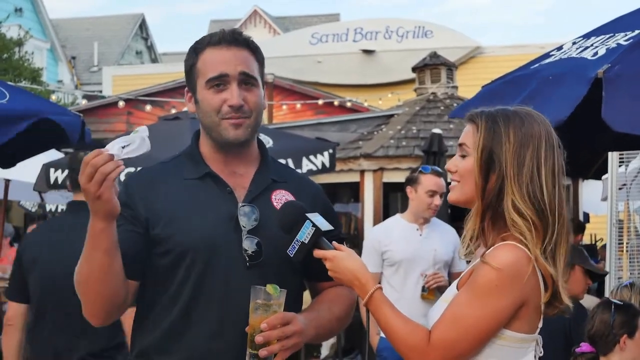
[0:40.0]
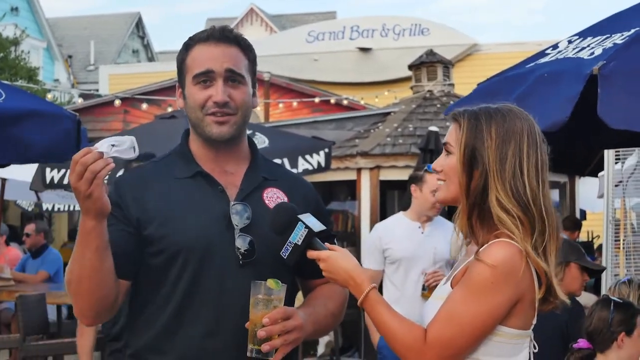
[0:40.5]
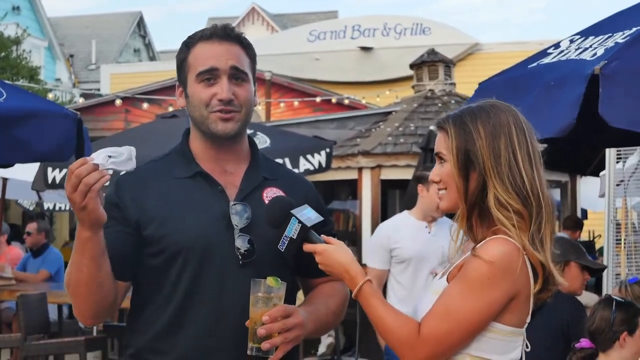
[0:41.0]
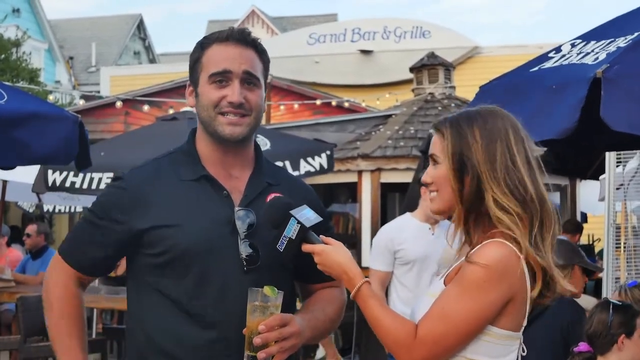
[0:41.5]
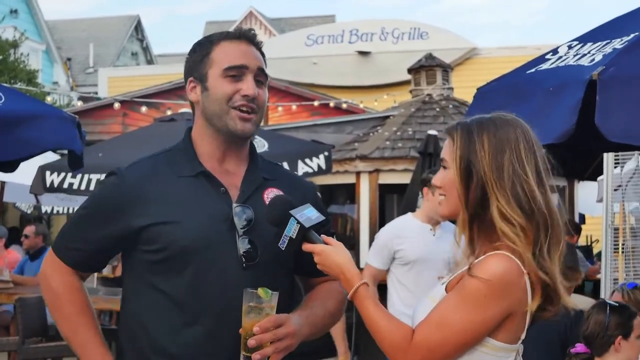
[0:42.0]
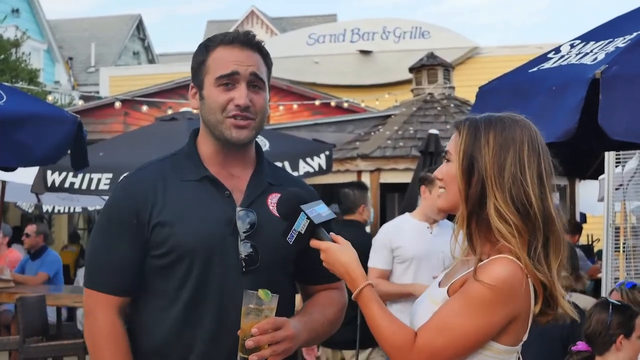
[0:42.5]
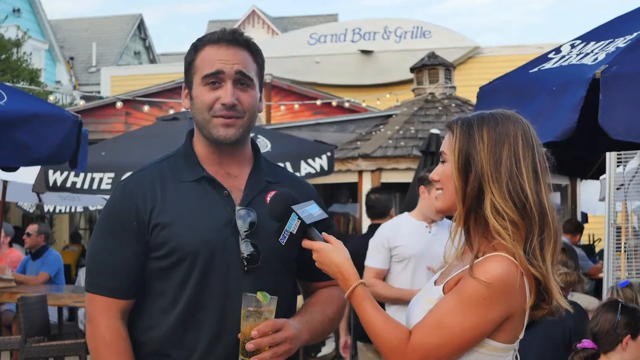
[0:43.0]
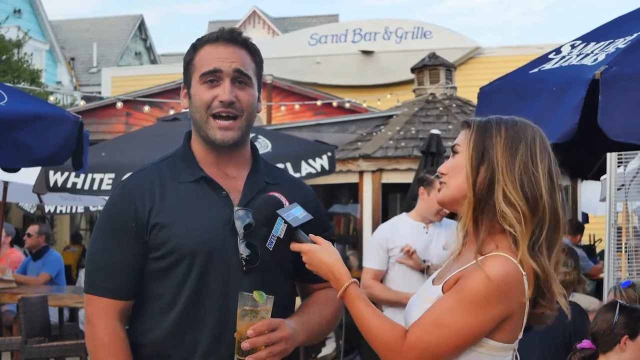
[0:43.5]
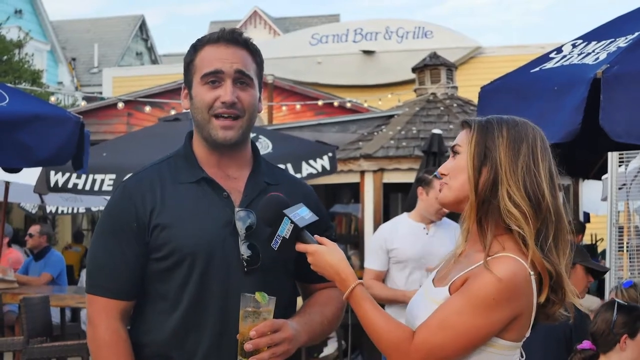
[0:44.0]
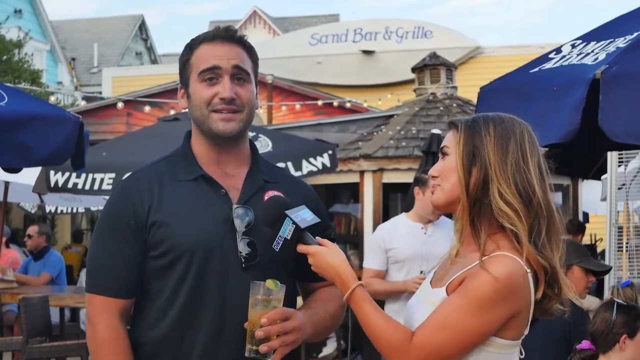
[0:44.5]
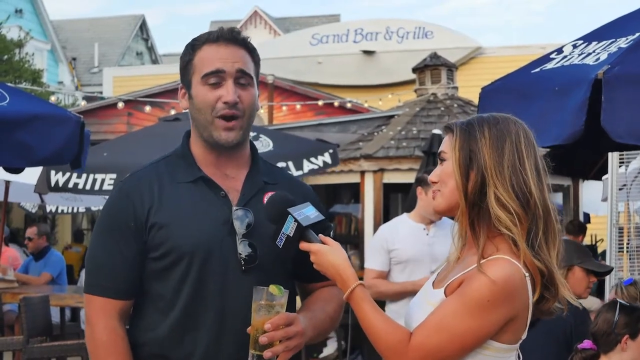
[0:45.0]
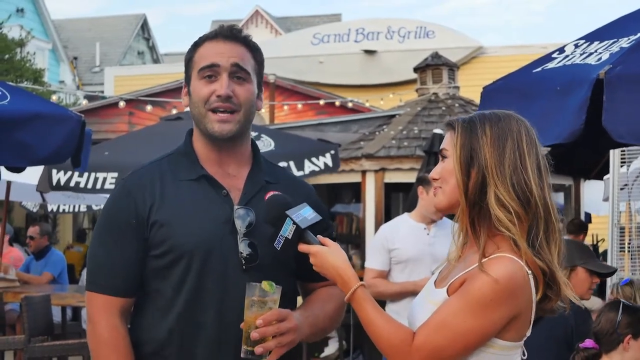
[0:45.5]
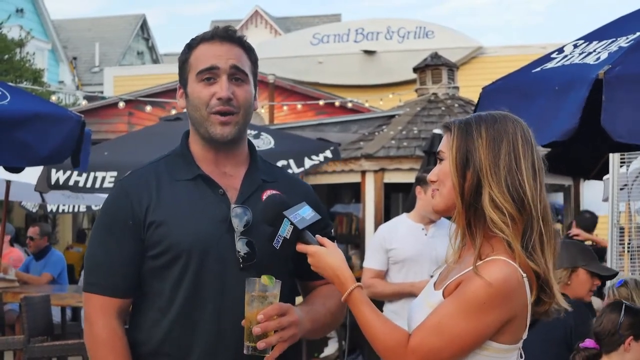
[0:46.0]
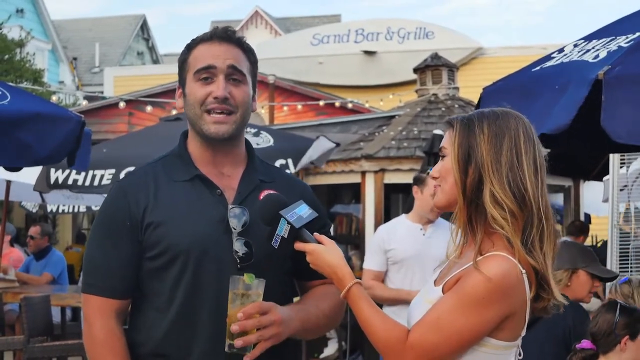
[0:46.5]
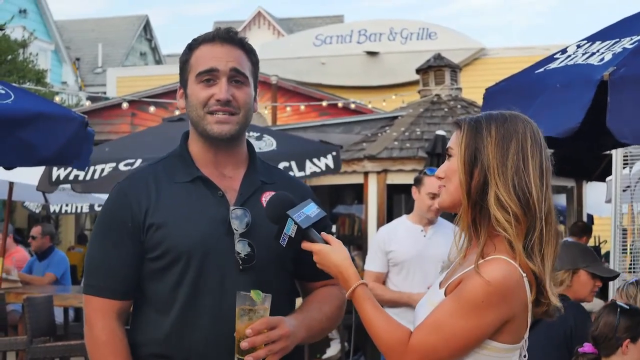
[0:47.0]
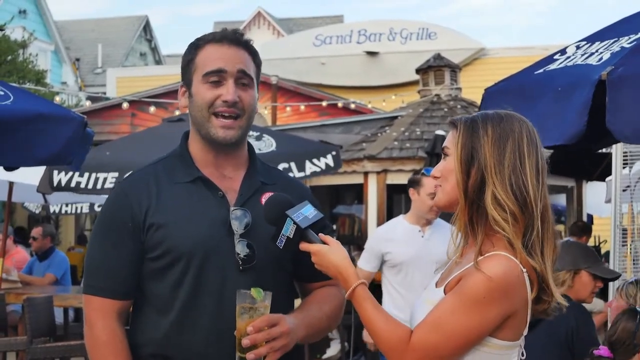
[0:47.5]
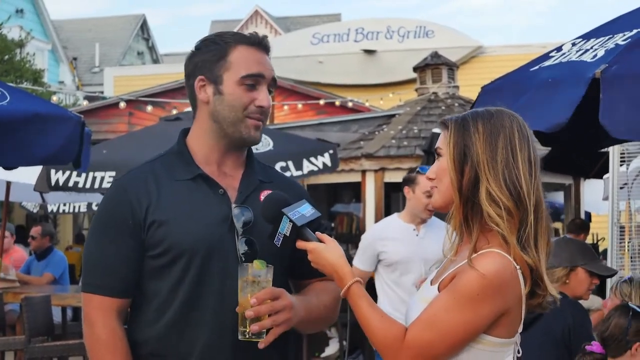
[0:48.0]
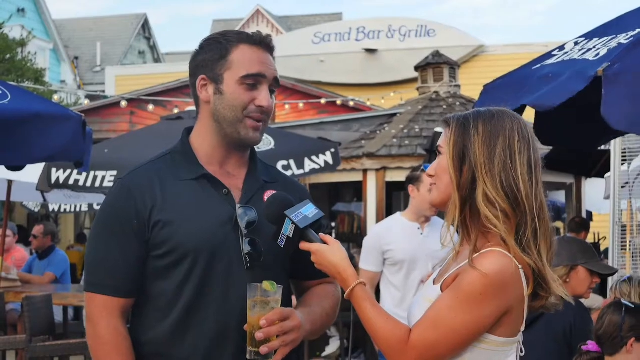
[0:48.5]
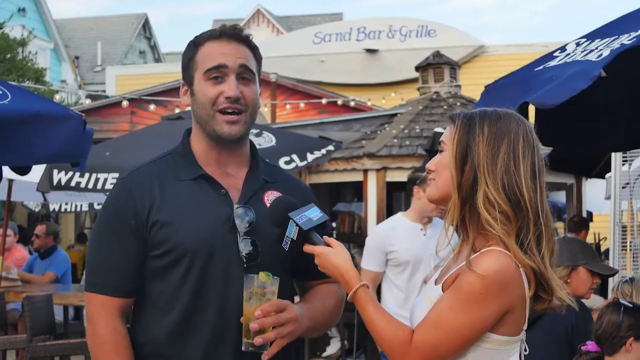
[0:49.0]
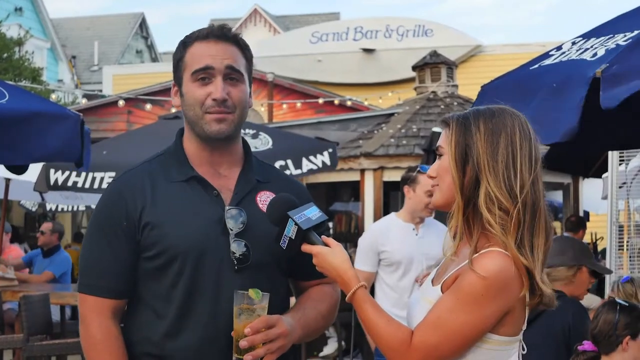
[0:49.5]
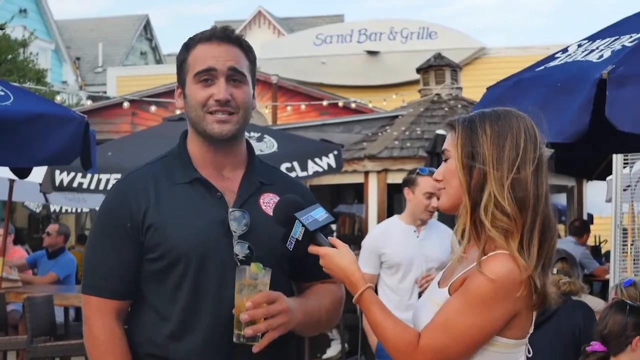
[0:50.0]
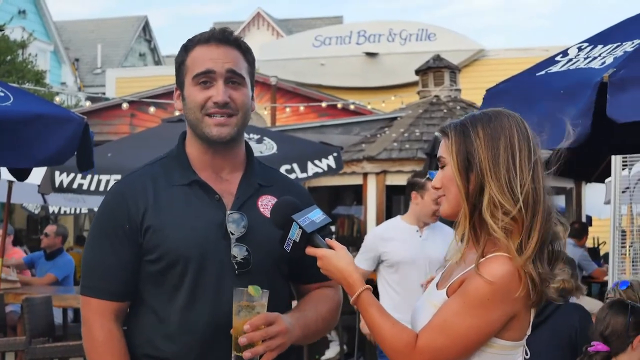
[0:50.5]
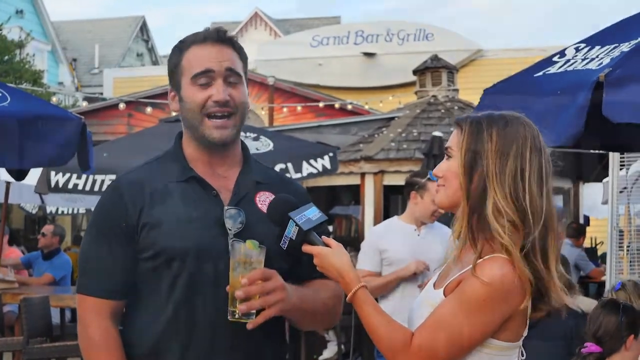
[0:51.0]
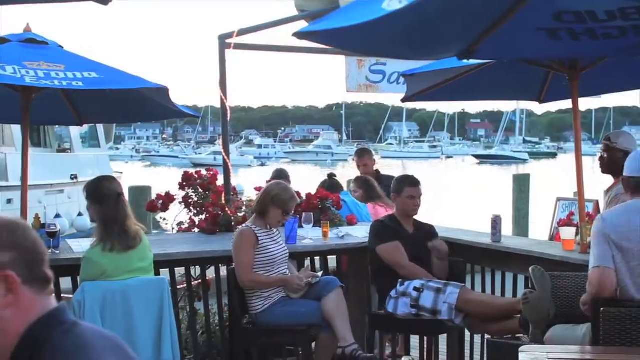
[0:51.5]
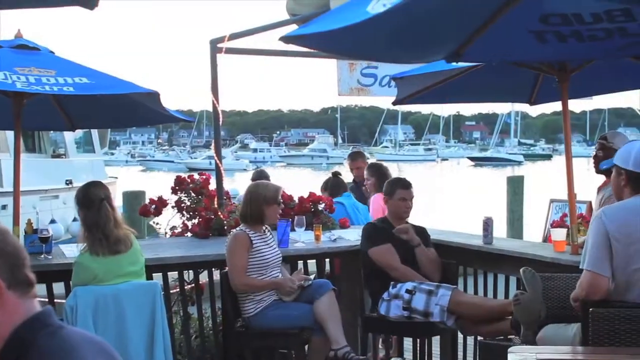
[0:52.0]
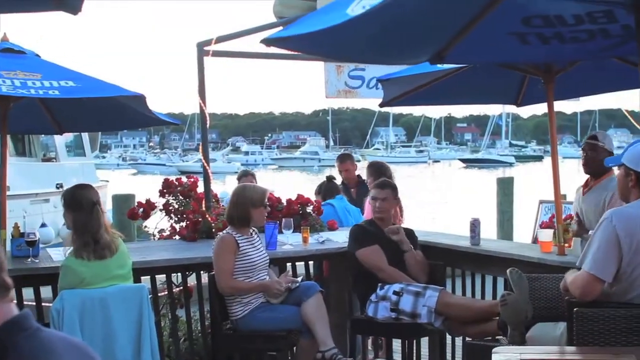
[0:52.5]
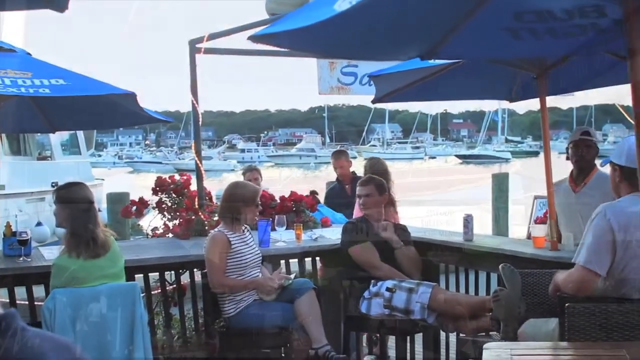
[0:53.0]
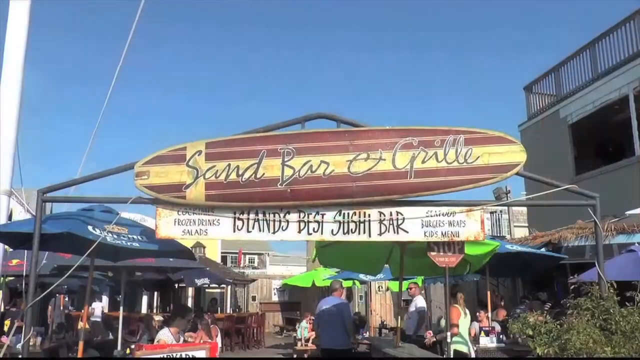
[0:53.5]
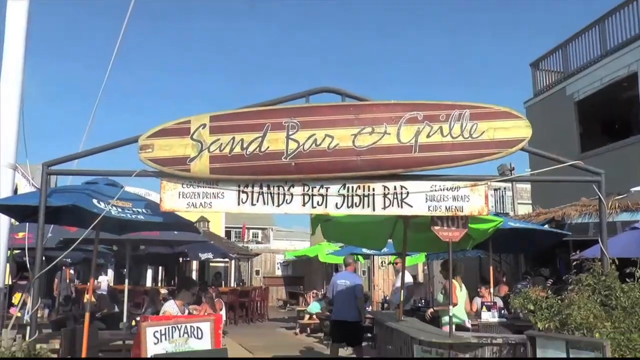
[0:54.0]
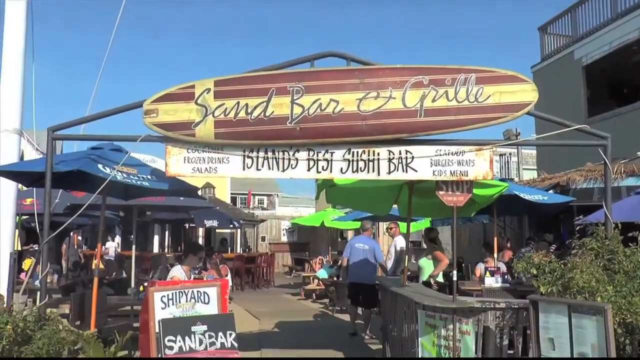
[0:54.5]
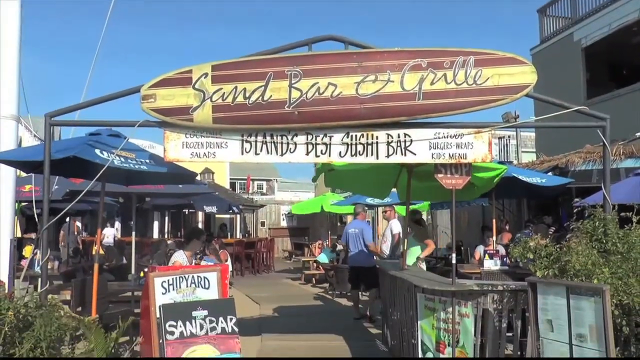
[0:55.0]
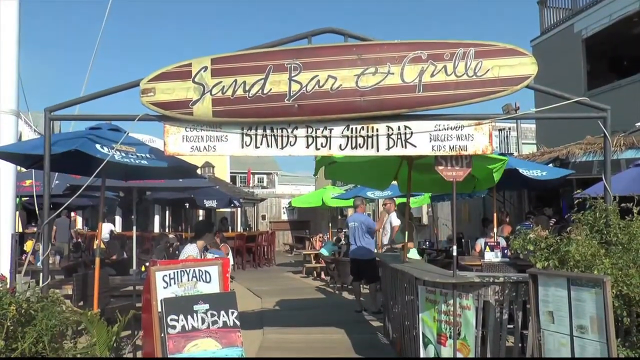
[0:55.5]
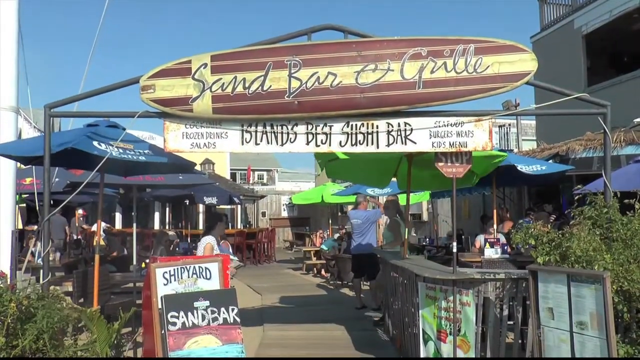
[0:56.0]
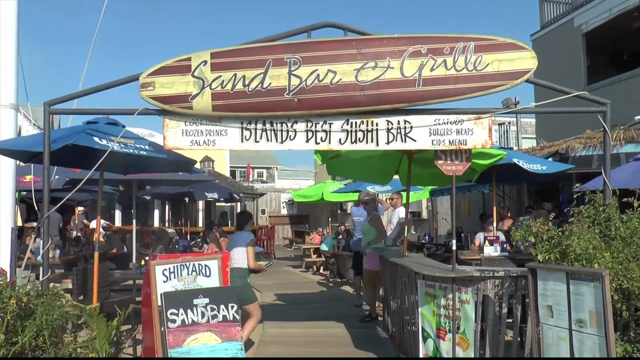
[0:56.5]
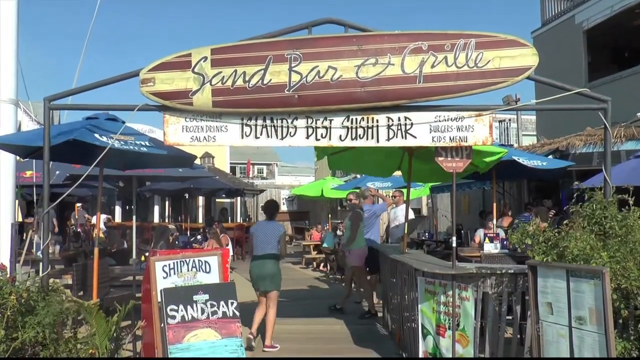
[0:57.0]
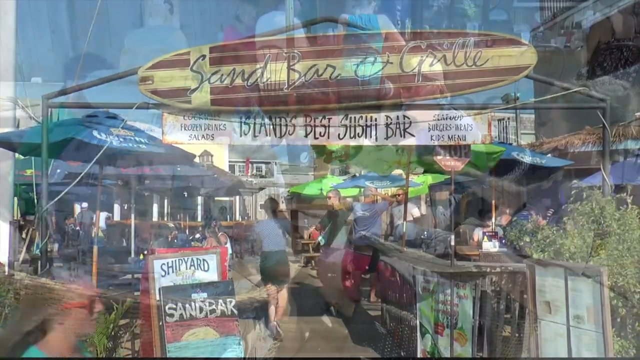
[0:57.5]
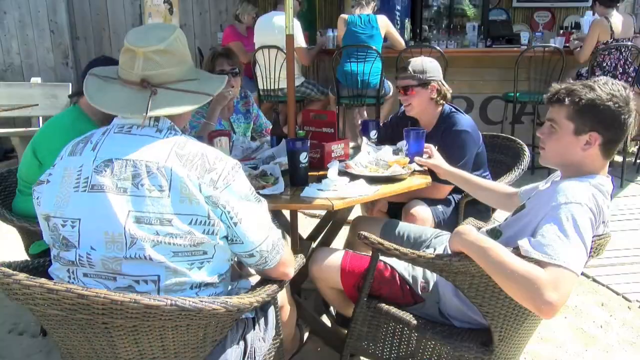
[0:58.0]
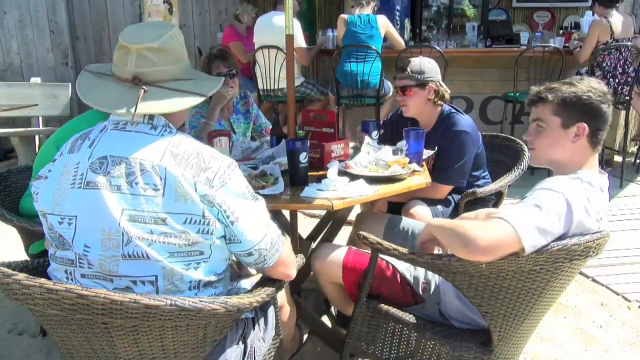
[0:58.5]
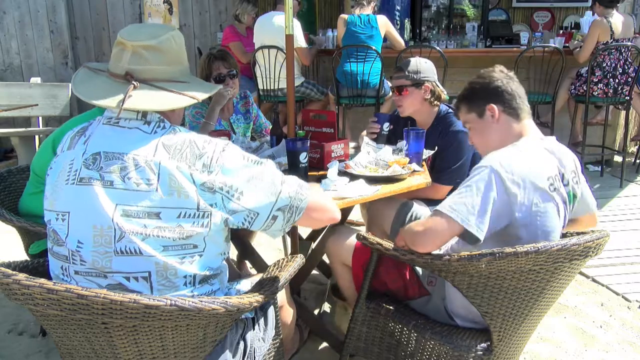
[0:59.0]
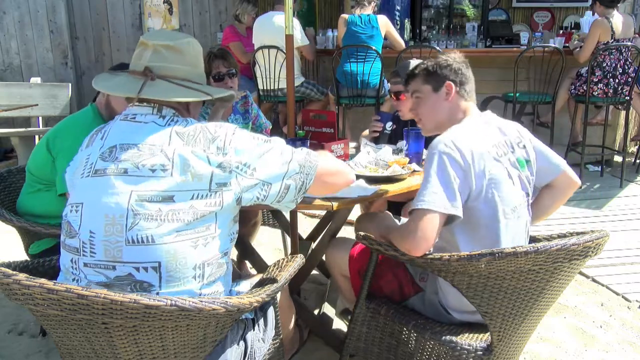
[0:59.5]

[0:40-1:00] The owner of the Sandbar, Jordan Wallace, is interviewed by the brown-haired reporter outside the Sandbar and Grill. He holds a white mask and seems to be holding a glass of margarita with a green lemon on it, and he wears a black t-shirt and black shades. The reporter wears a white top and holds a black microphone in her left hand. The scene cuts to people sitting at the bar chatting while a bartender tends the bar; in the background there are boats at the sea docks, and everybody looks happy. Then it cuts to a sign with writing that includes "best sushi bar," so the bar seems to also serve sushi. People are still chatting with each other and everybody looks happy.